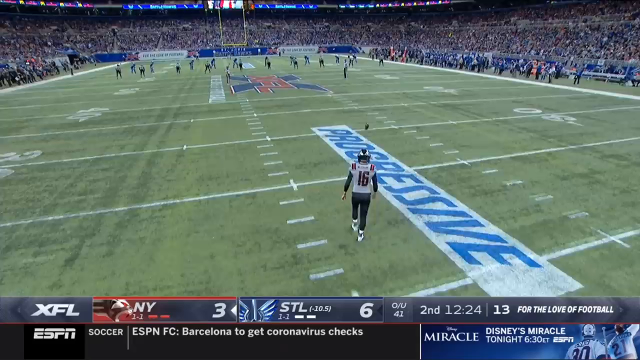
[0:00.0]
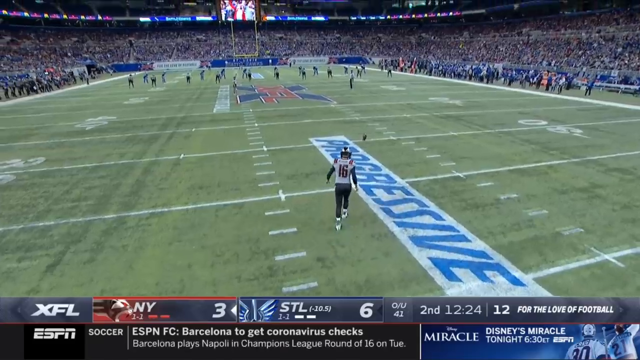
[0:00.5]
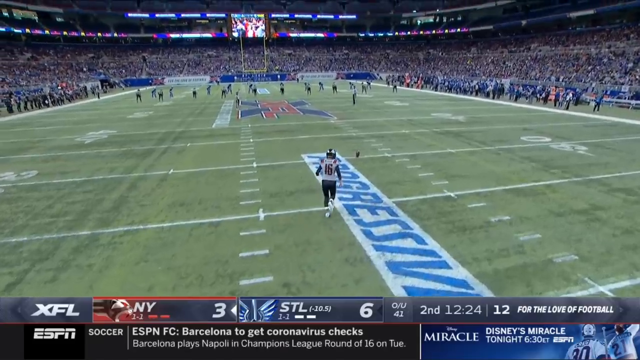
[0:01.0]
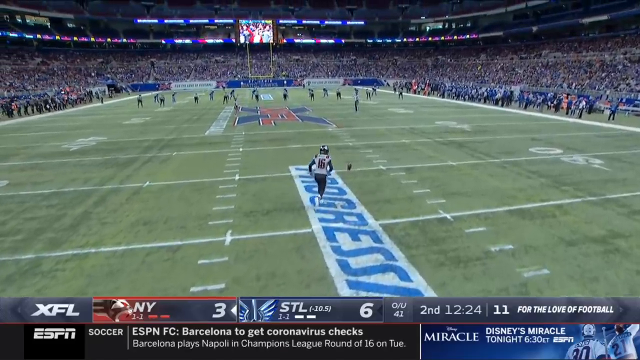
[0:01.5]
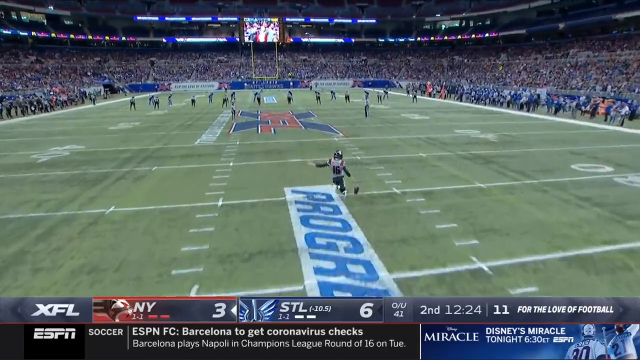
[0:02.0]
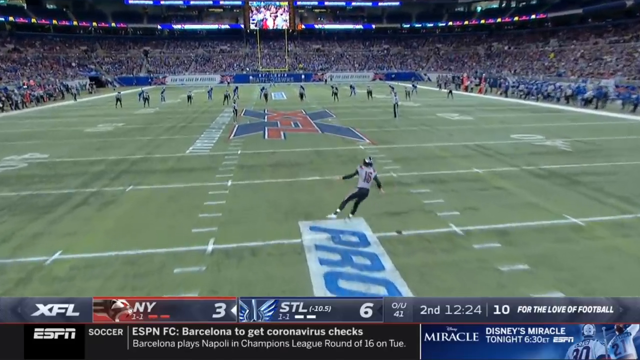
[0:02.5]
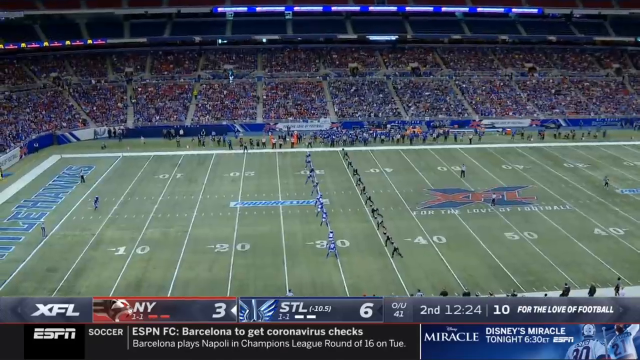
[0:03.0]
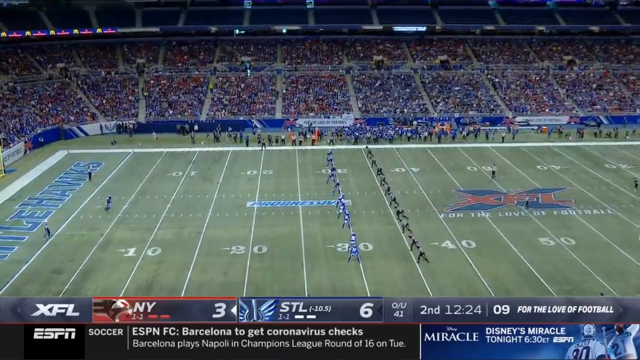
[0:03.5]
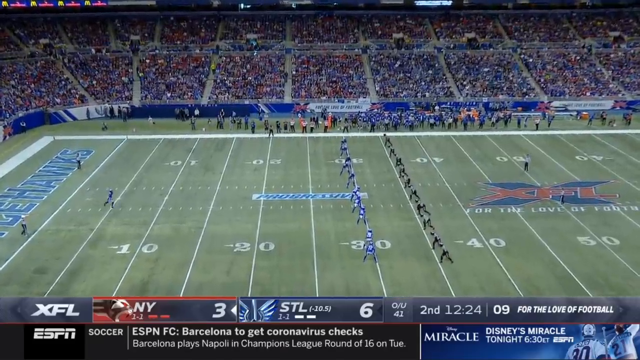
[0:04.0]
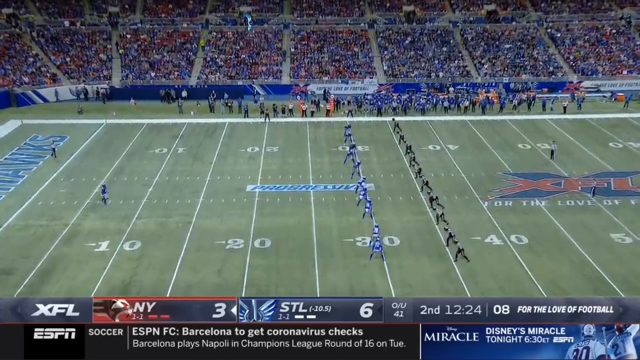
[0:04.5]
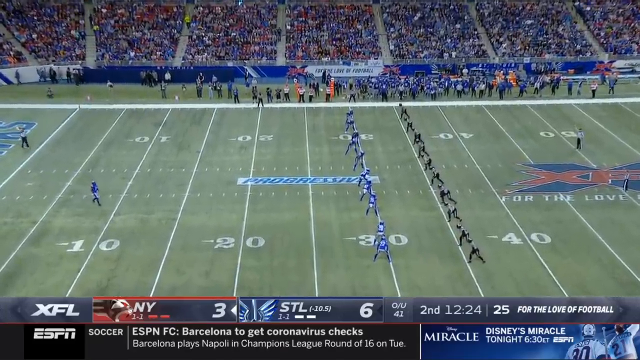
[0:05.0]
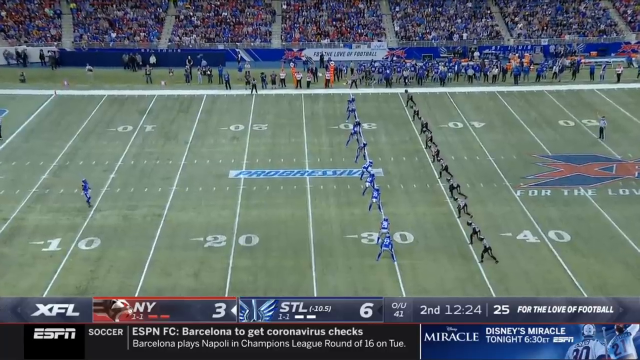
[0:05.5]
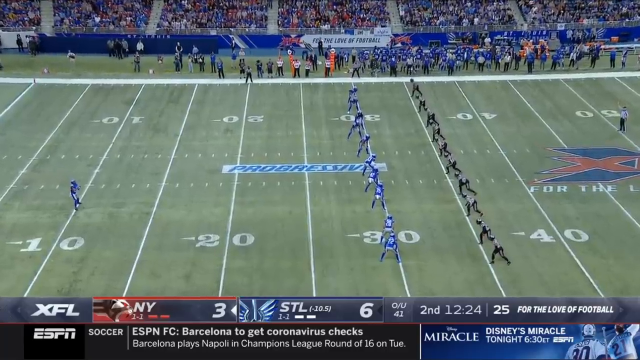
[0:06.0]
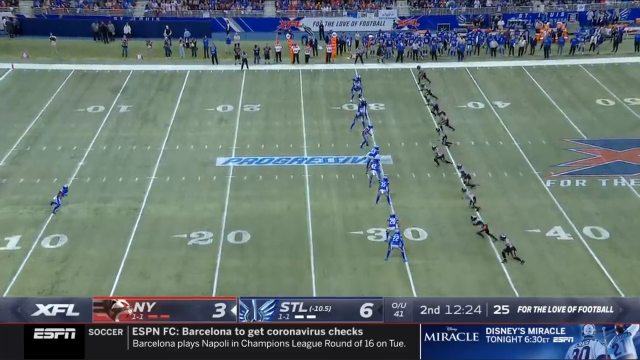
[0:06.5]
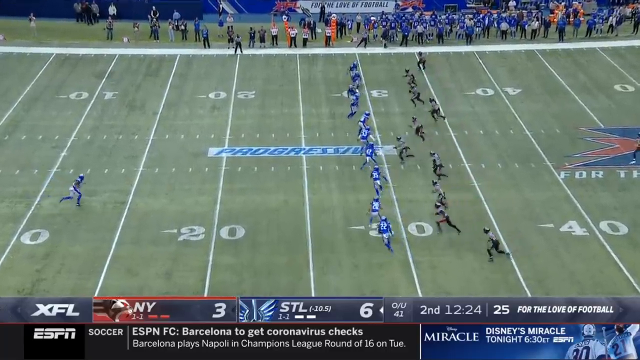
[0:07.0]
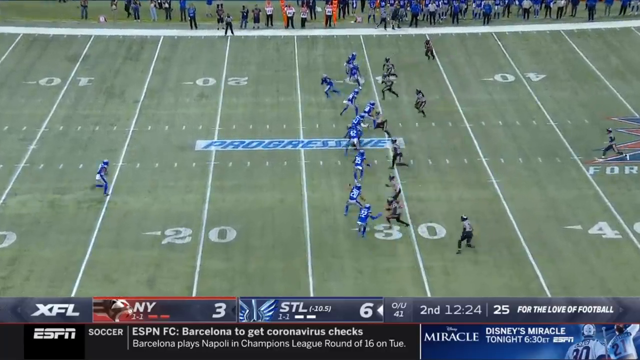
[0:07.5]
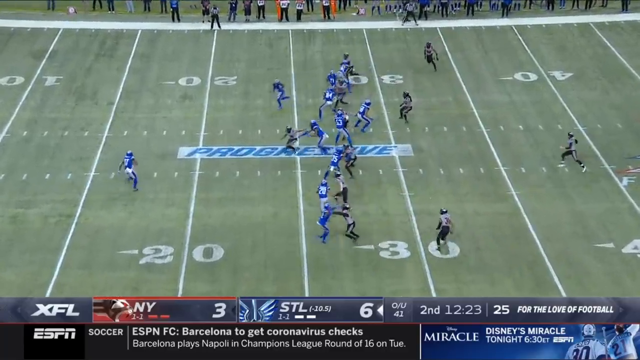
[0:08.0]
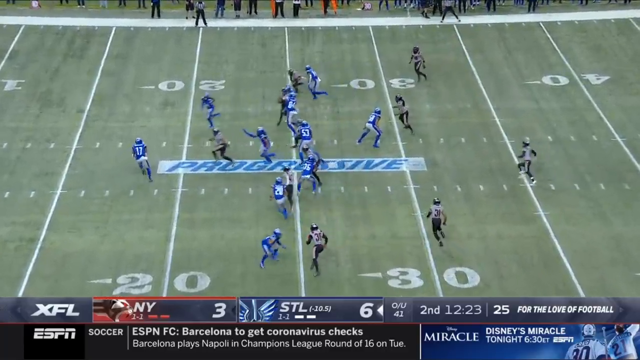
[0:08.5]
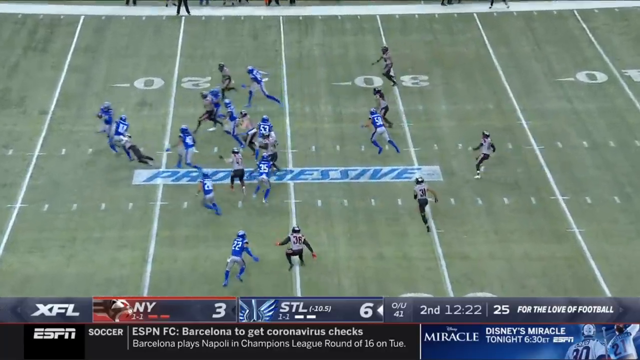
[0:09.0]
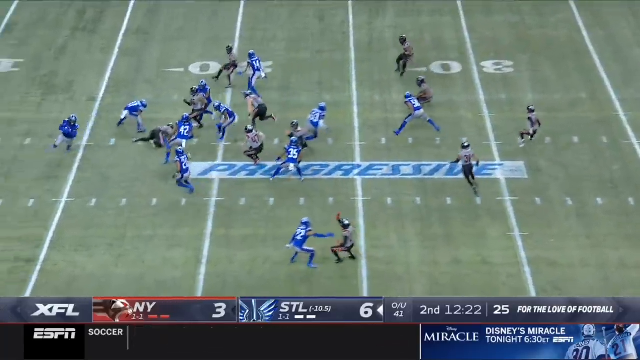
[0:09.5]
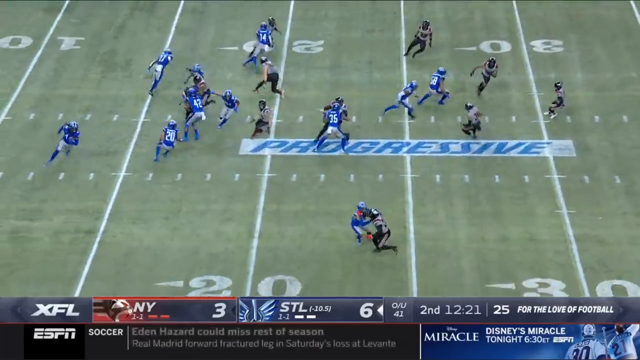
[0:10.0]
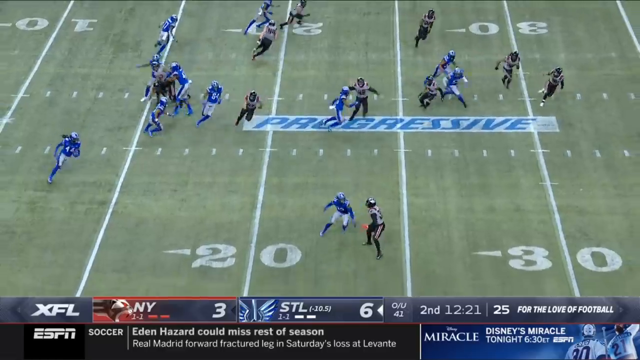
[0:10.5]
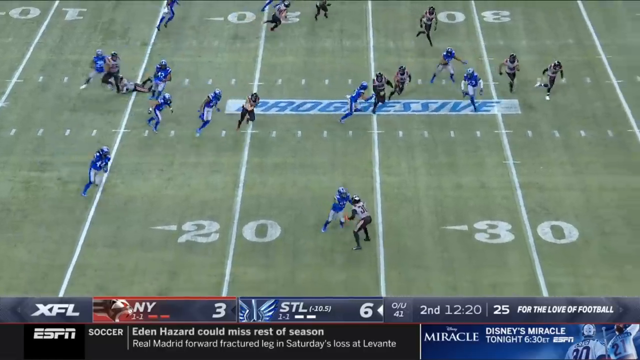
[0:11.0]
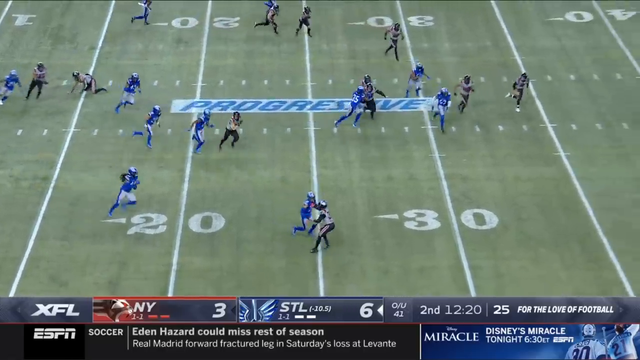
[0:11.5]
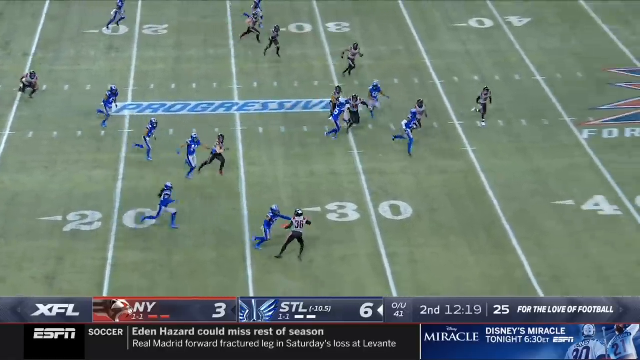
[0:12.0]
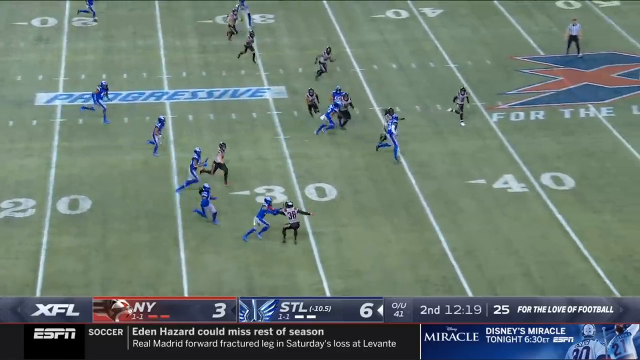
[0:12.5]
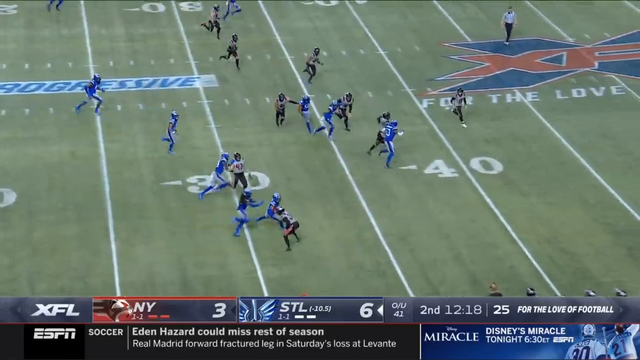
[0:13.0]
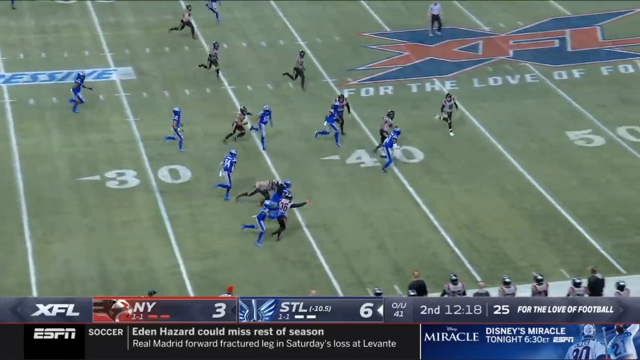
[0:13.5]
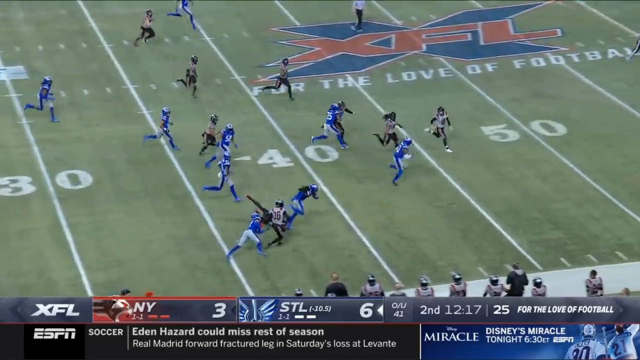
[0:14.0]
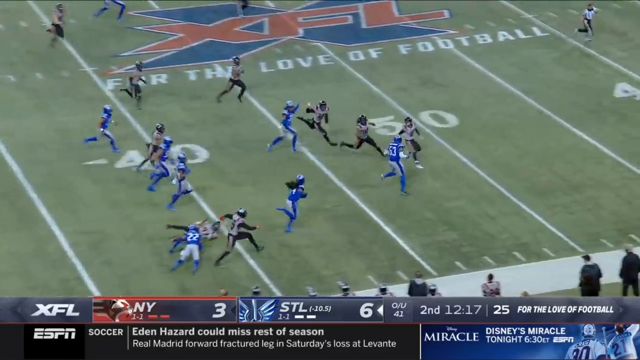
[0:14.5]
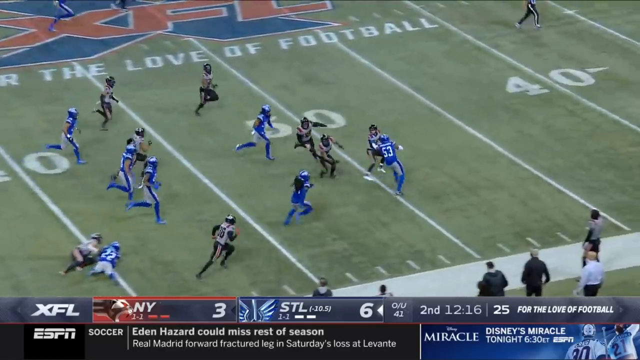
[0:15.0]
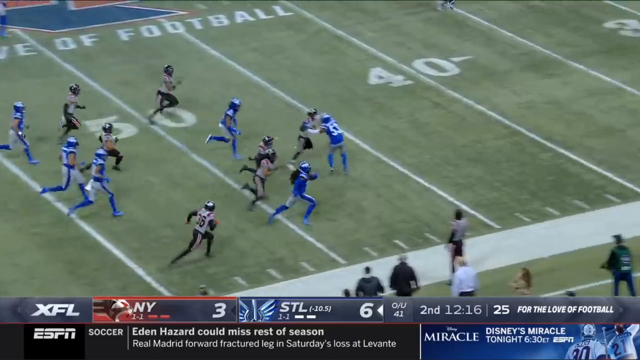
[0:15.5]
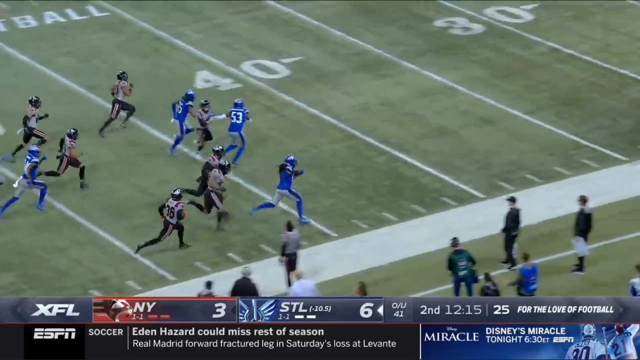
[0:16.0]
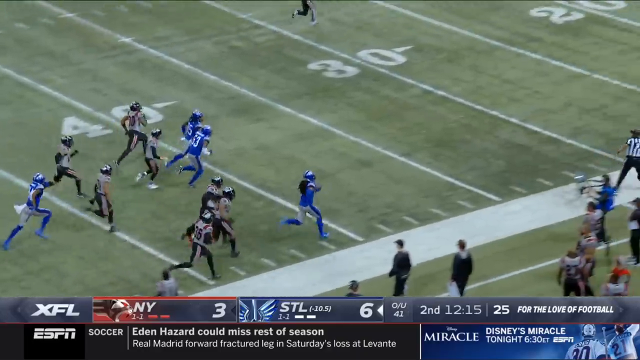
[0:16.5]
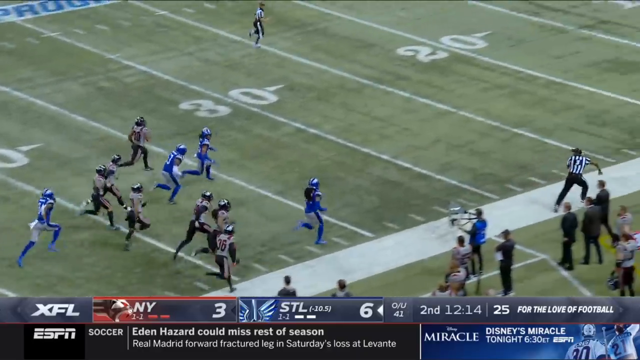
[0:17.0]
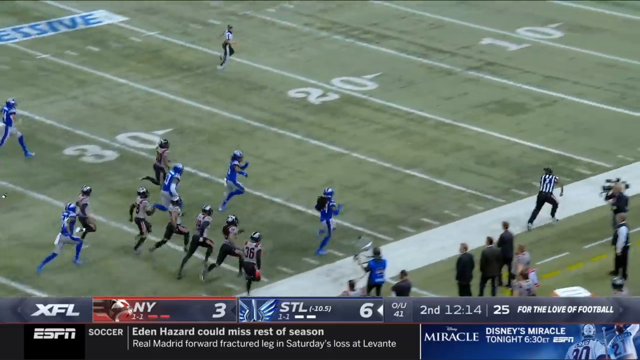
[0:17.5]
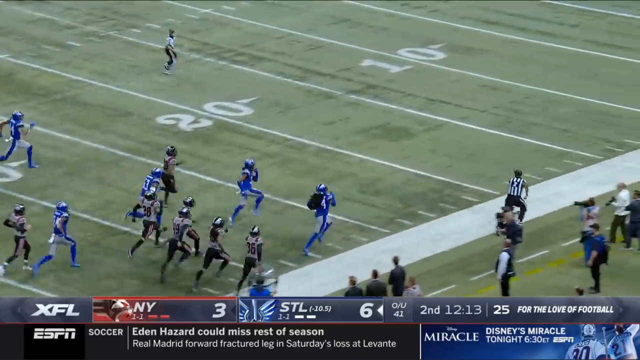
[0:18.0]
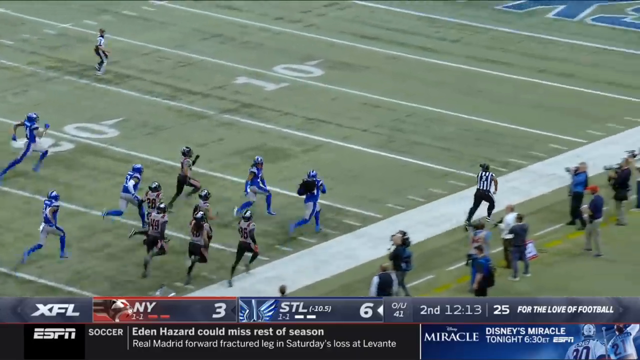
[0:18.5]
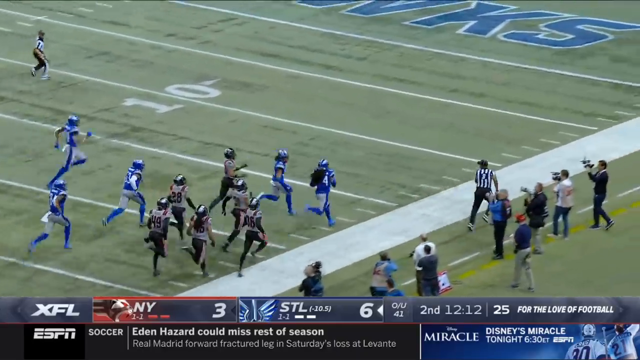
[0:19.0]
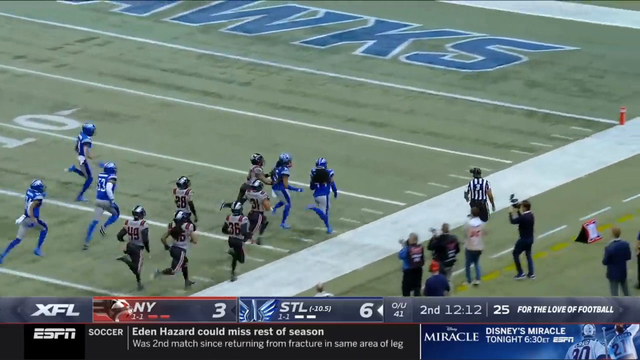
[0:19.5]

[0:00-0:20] An NFL football game begins with a kickoff; a player catches the ball and starts running. Players wear blue shirts, and there are many players on the field. He runs for a touchdown, and the team looks like it is the Battle Hawks. Everyone cheers, and people in the stands wearing Hawk outfits cheer. A sportscaster watches the game, and then the player who scored the touchdown is shown. A referee comes in, and the screen splits between the sportscaster and the referee, who walks around and walks backwards. The team then goes for the points; text says "three points" or "two points", and the kick misses. A lady from ESPN interviews the player who scored the touchdown, who has number 44 on his jersey. "XFL" appears, and then the touchdown is re-shown in replay mode.